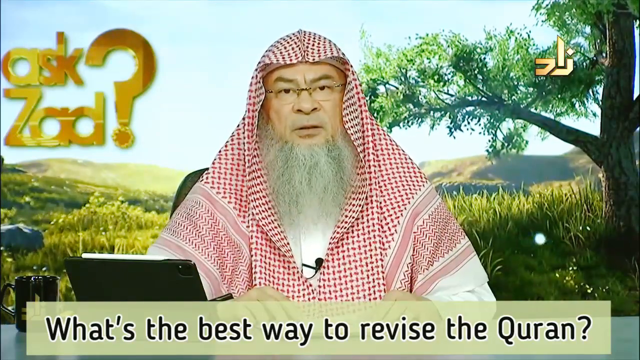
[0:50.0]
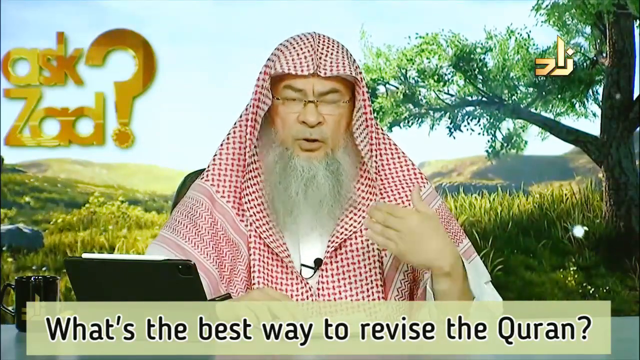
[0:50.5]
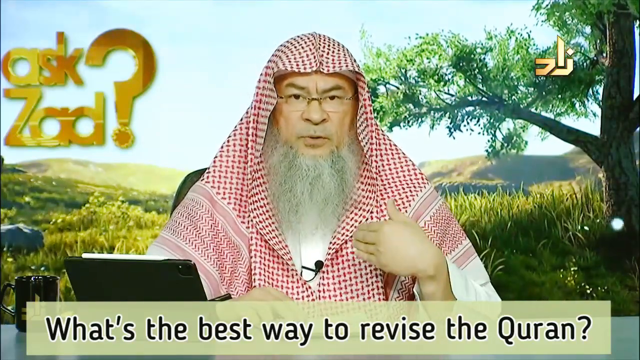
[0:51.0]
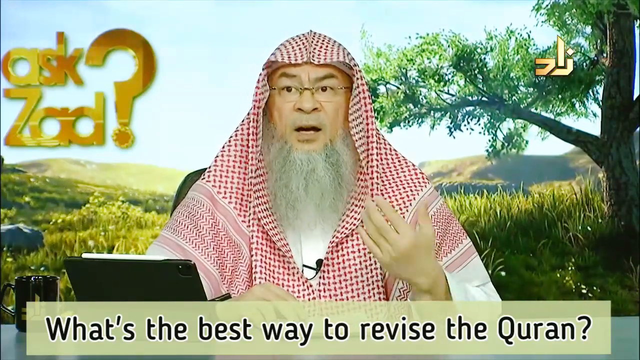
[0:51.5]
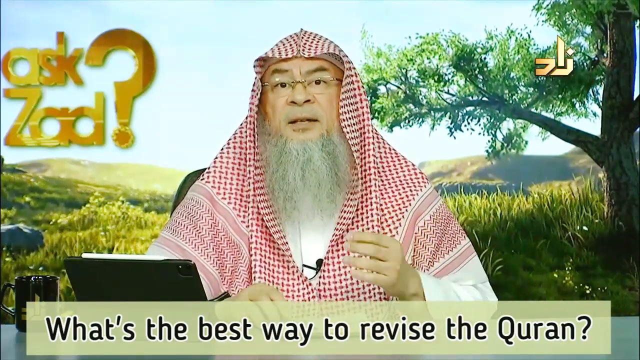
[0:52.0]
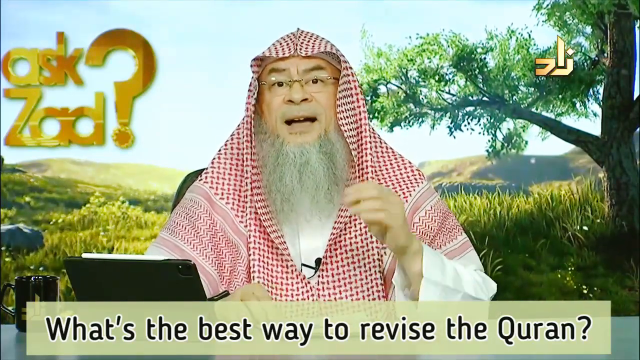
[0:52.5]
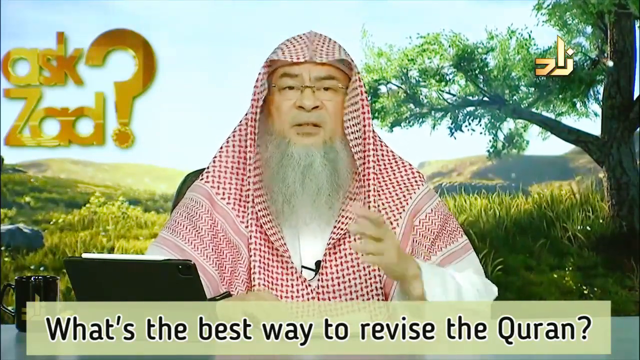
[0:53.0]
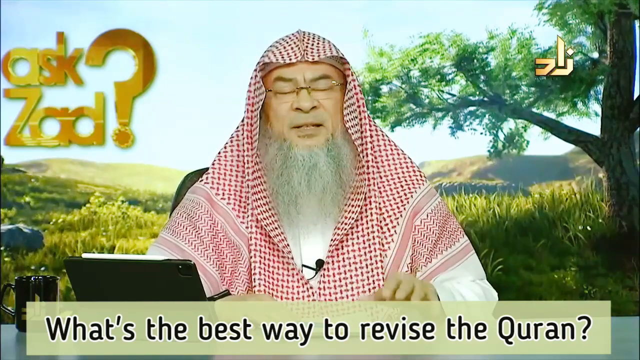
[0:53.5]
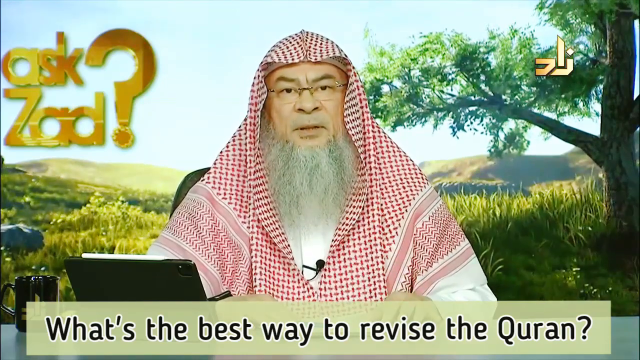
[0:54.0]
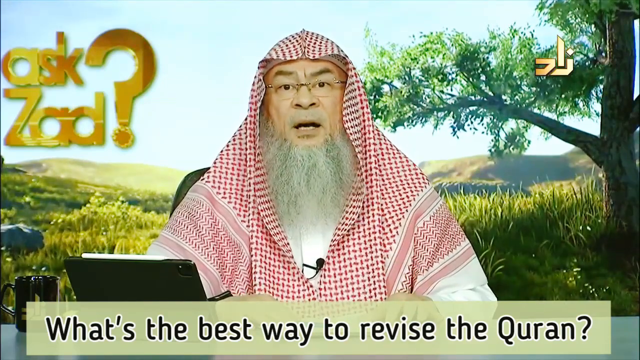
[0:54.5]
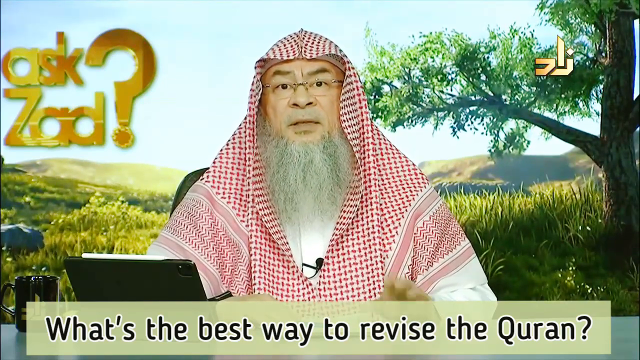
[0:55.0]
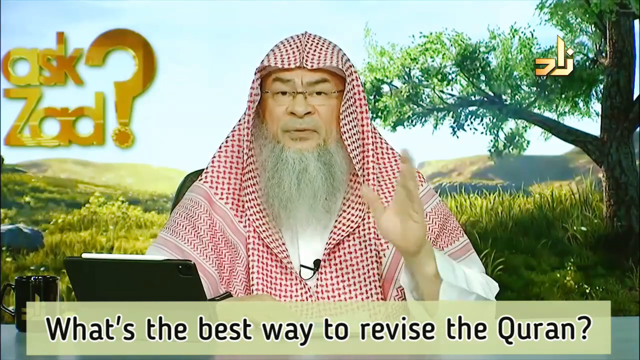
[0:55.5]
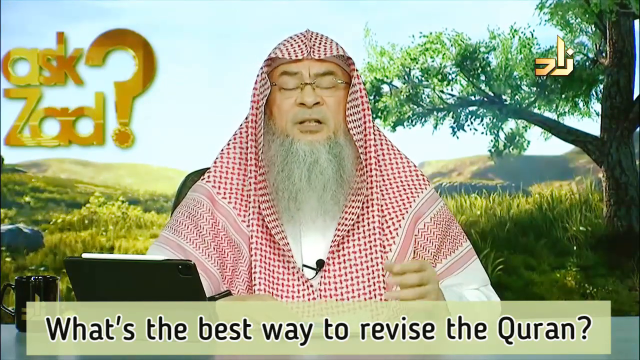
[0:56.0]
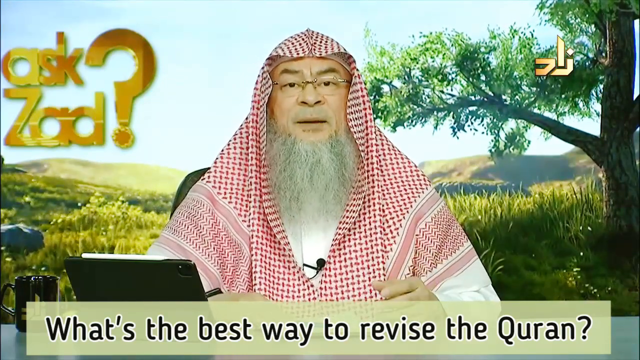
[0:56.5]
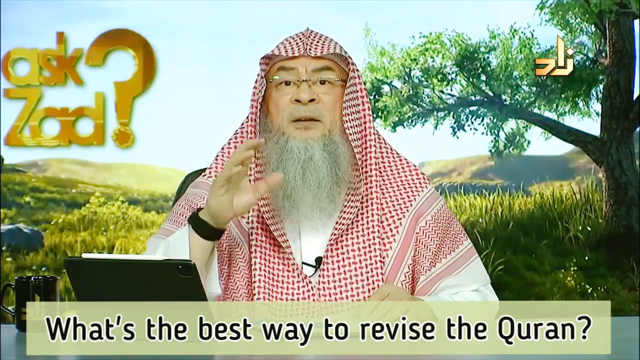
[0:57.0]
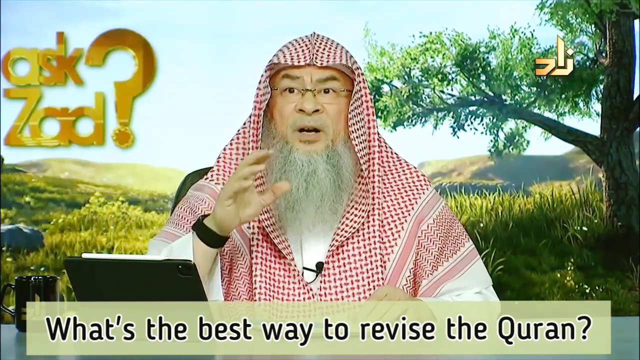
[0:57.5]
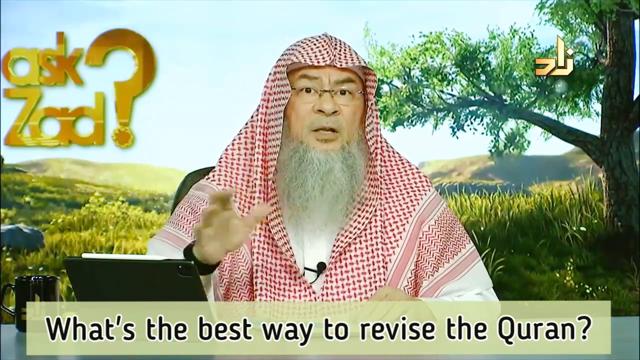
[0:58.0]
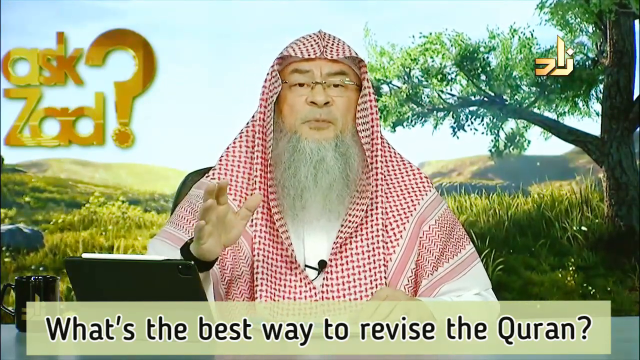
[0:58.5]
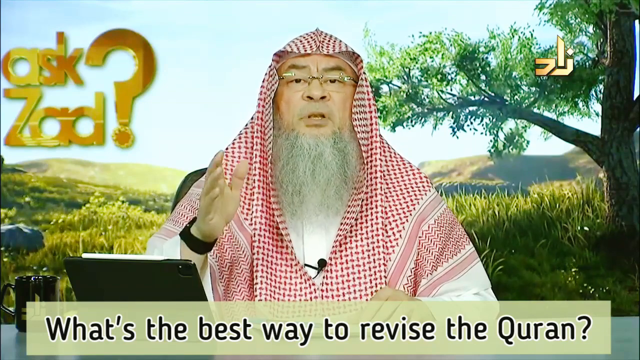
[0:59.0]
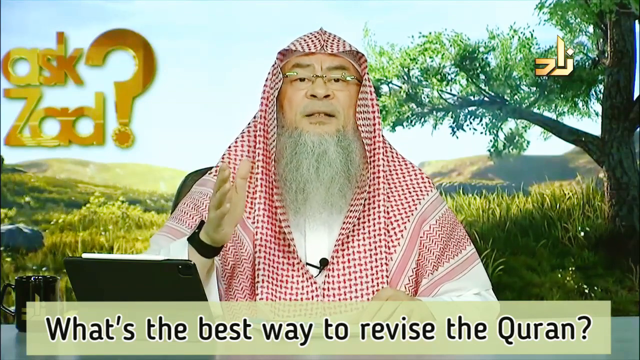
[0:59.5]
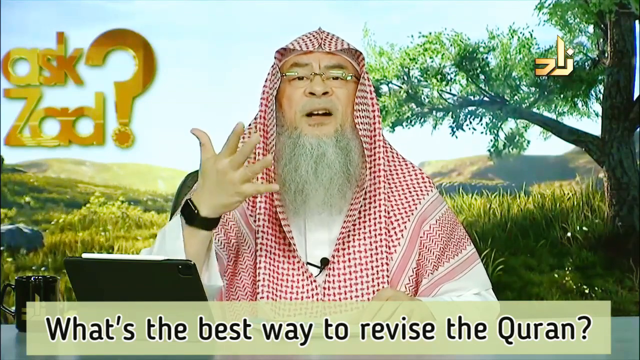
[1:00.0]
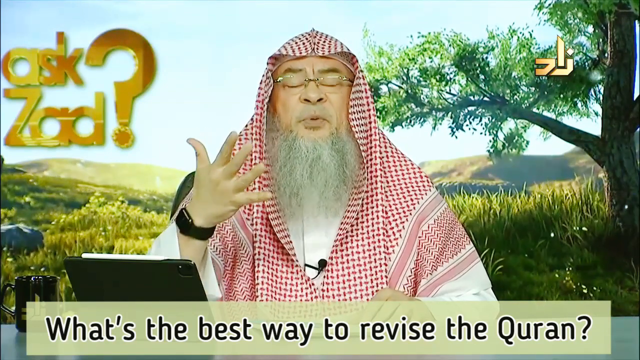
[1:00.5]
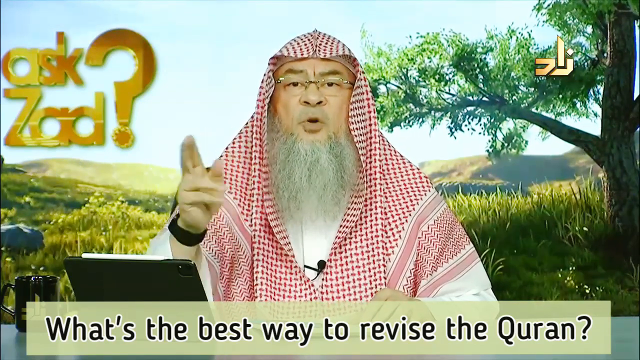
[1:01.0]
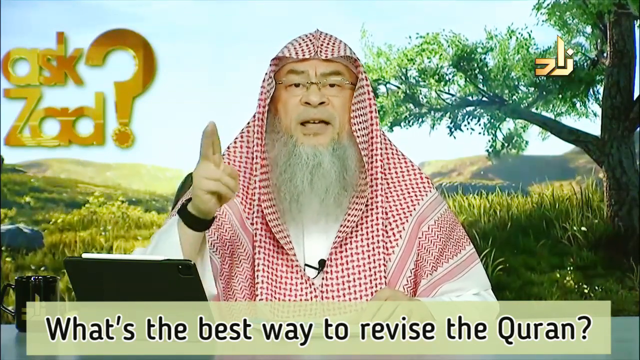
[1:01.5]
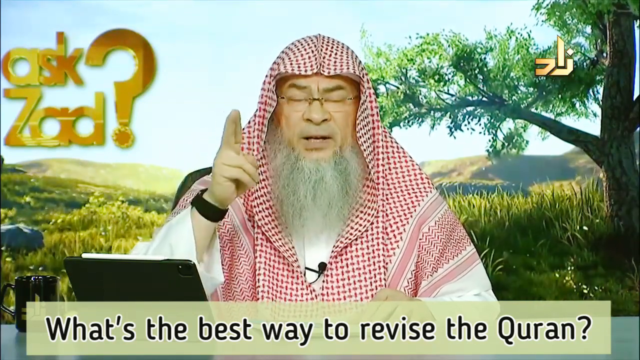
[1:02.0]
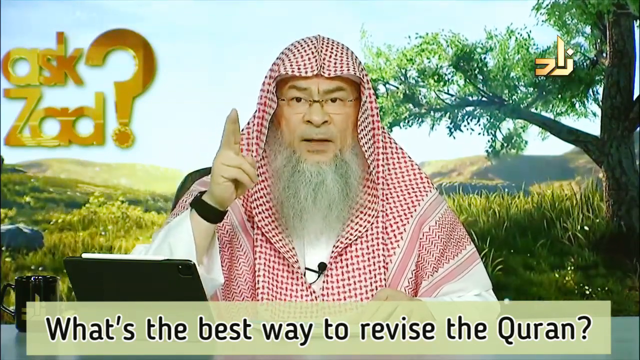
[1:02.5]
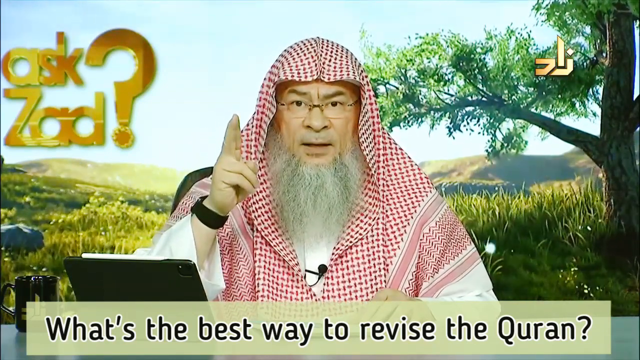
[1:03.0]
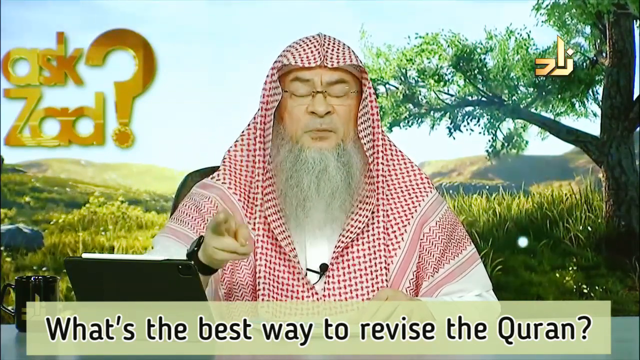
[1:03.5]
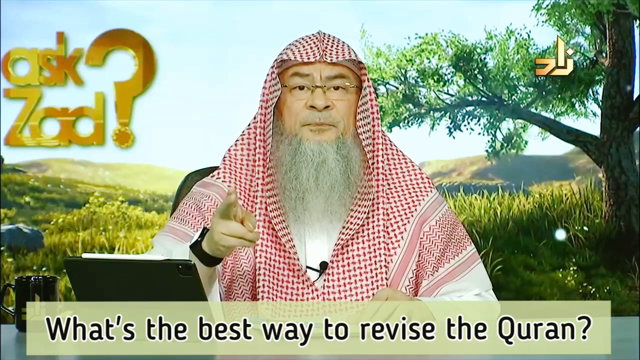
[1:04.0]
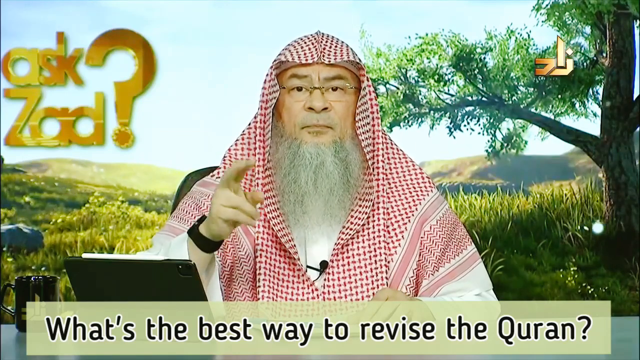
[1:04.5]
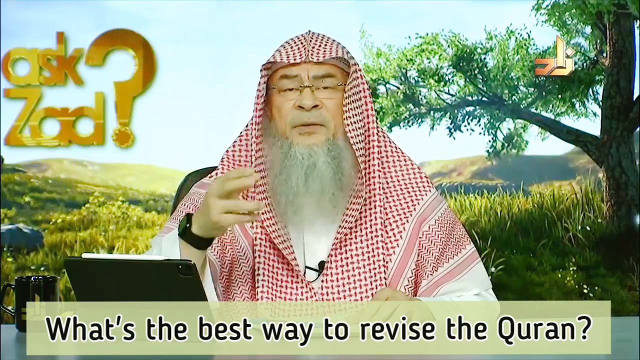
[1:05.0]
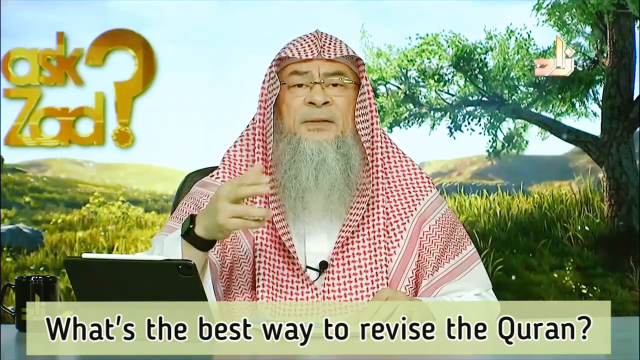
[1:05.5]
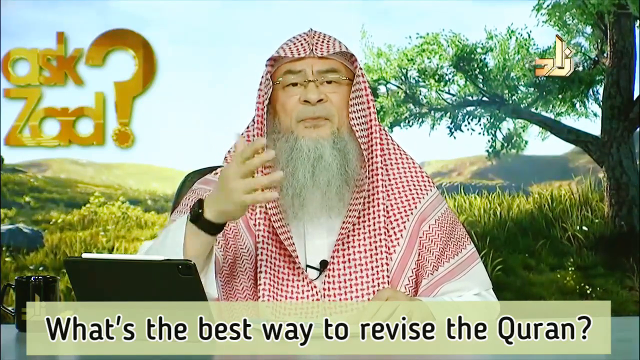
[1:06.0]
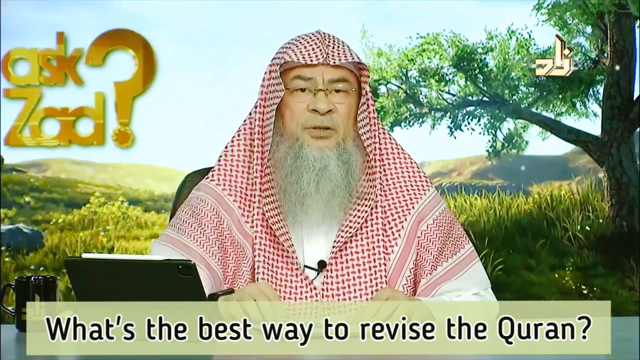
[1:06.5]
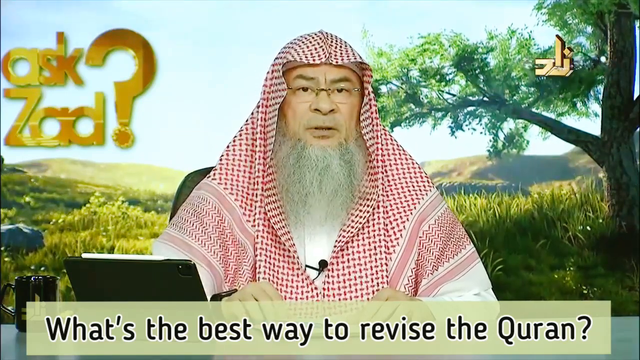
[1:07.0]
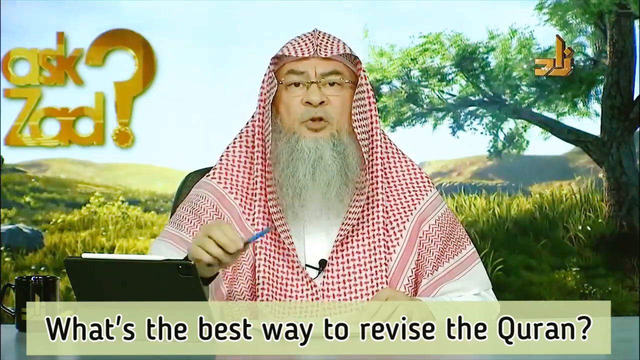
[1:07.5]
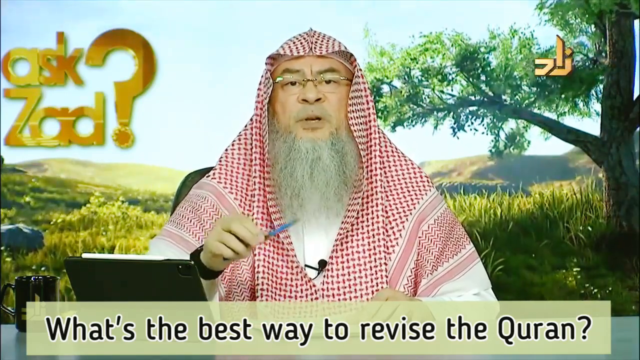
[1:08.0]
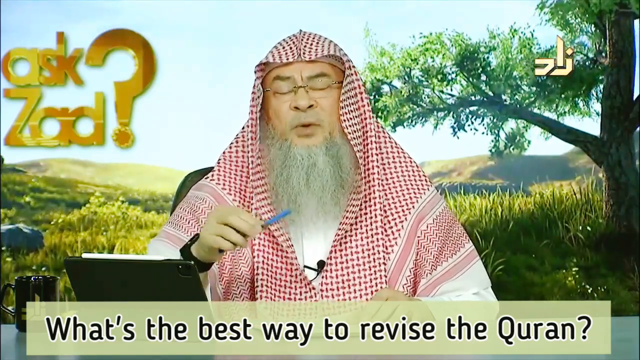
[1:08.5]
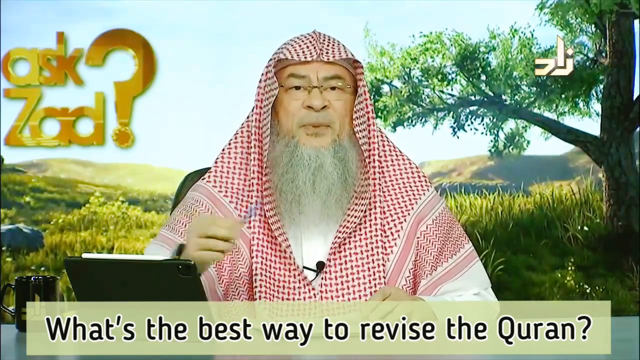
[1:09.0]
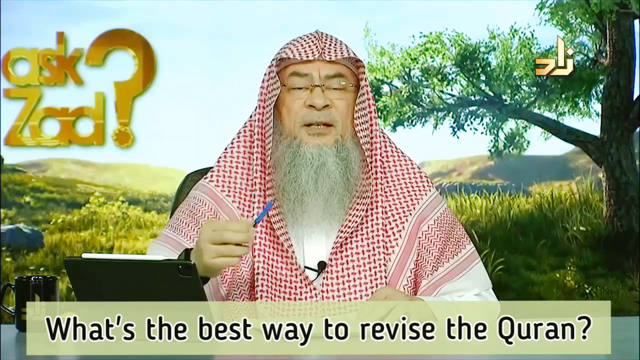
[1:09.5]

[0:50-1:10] His right hand is on the table, not moving, while he uses mainly his left hand to speak and gesture. He pushes forward with his left hand, swipes it away, and makes a windscreen-like motion with it before his left hand goes to the table in front of him. He then uses his right hand to point towards the camera, spreads out his fingers and faces the hand towards himself. He makes a point using his index and middle fingers while his other fingers and thumb are curled into his palm, then points up to the sky and towards the camera, and spreads all his fingers out again to express a point. He then picks up a blue pen with his right hand and gestures, waving it slightly. The background behind him is a green screen made to look like a field of bright green tall grass, with a dark tree with dark green leaves on his left and a long branch that reaches him in the middle.